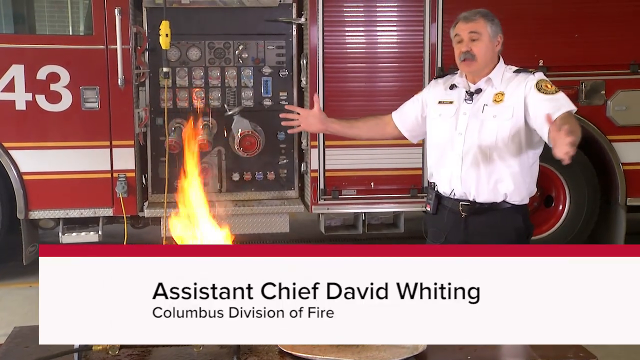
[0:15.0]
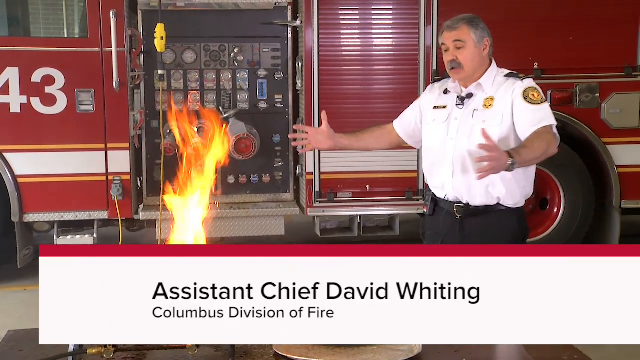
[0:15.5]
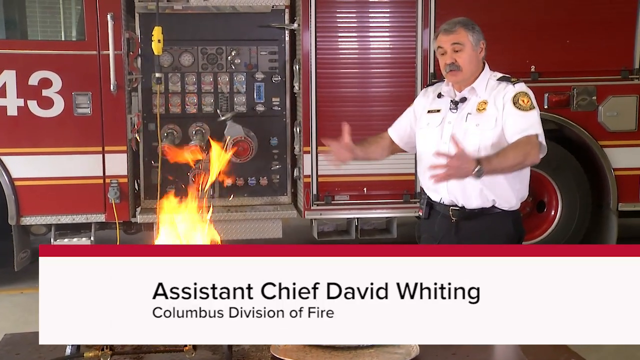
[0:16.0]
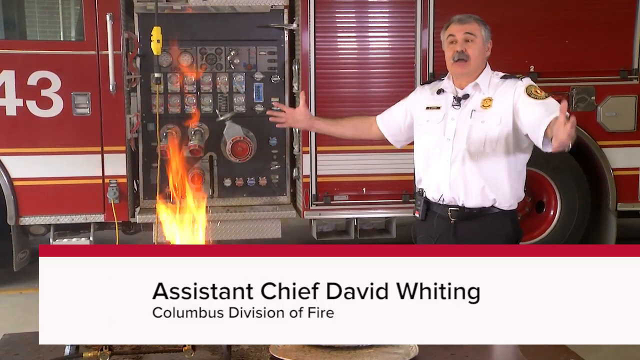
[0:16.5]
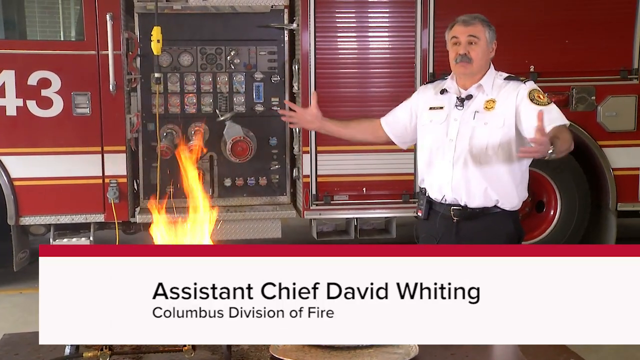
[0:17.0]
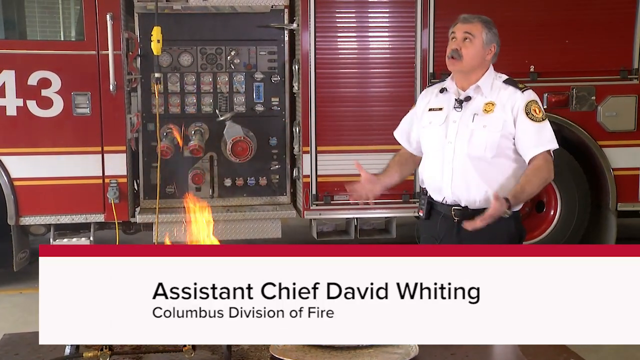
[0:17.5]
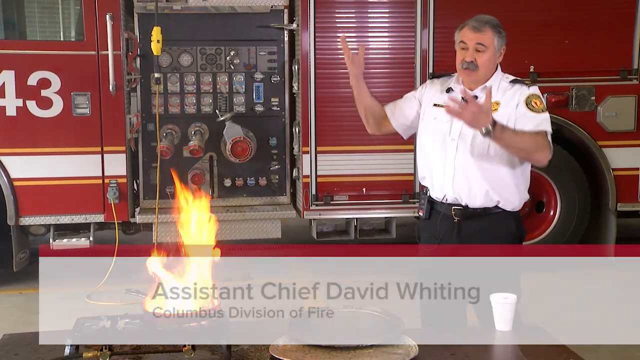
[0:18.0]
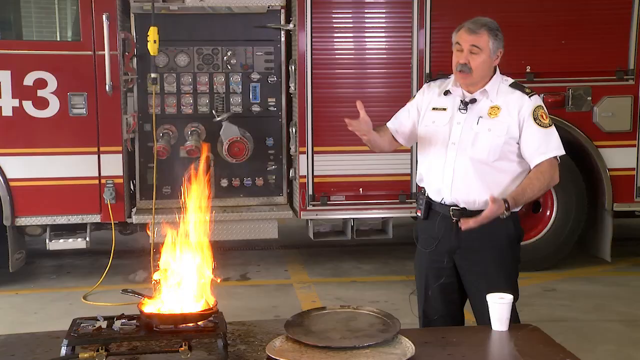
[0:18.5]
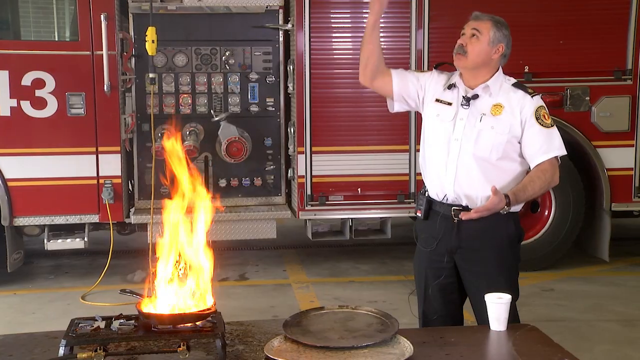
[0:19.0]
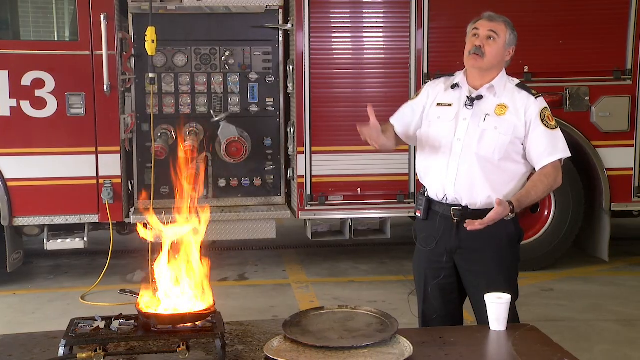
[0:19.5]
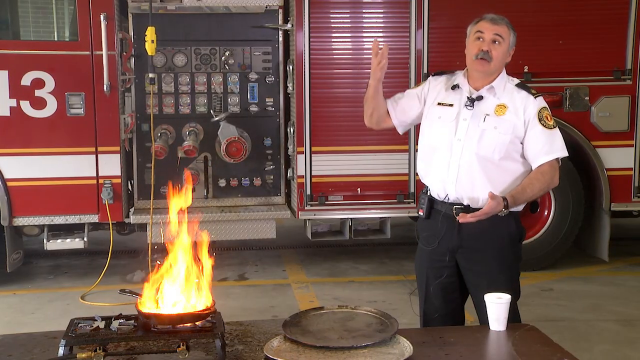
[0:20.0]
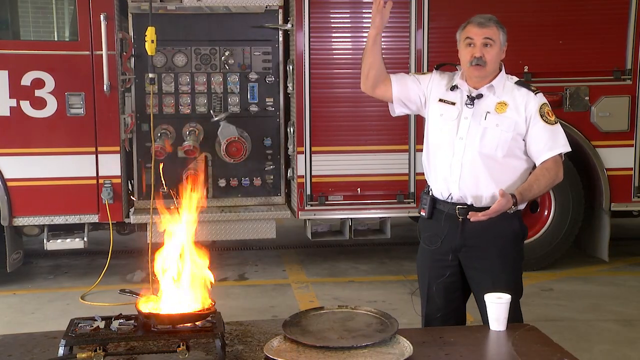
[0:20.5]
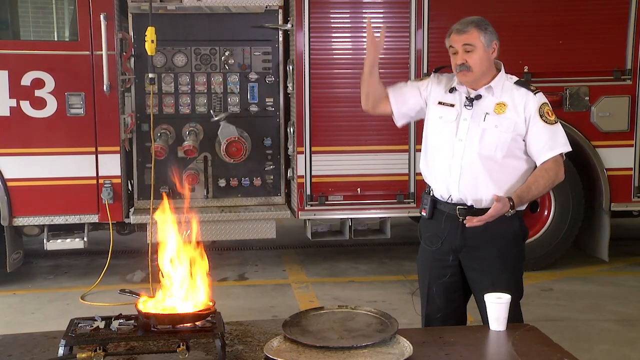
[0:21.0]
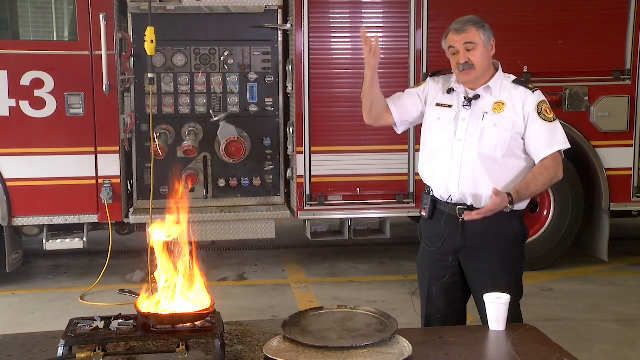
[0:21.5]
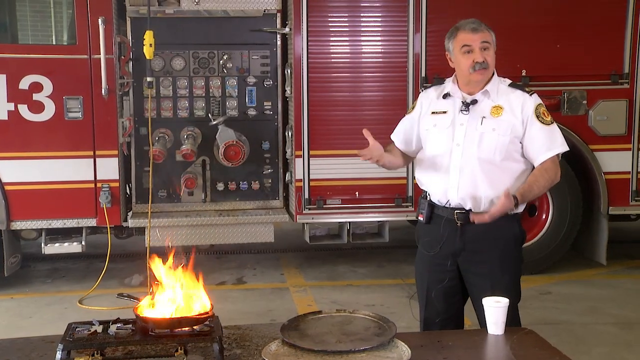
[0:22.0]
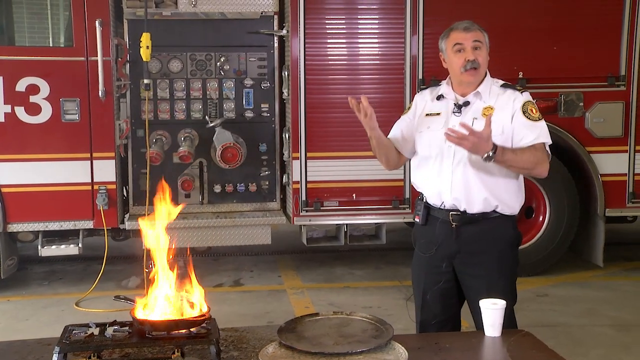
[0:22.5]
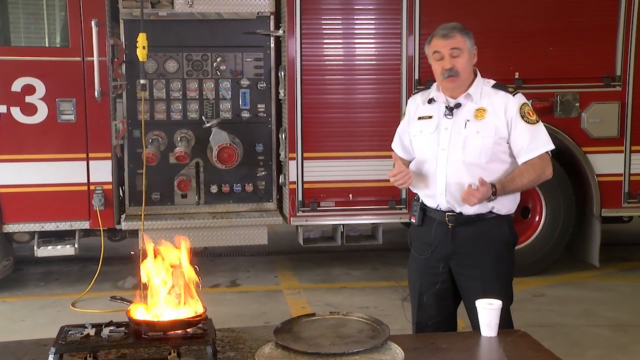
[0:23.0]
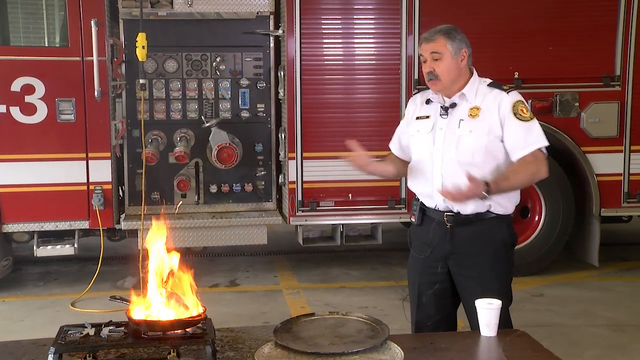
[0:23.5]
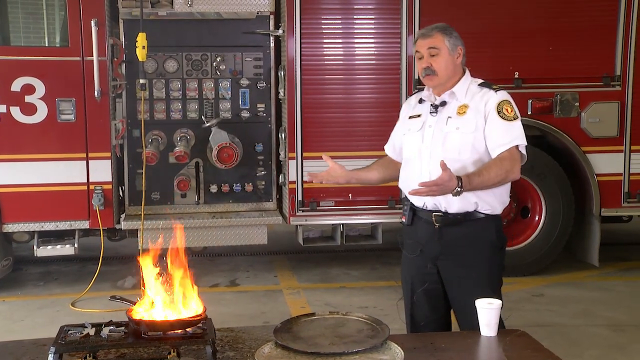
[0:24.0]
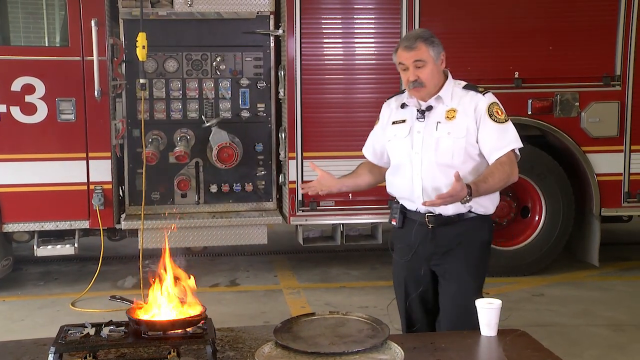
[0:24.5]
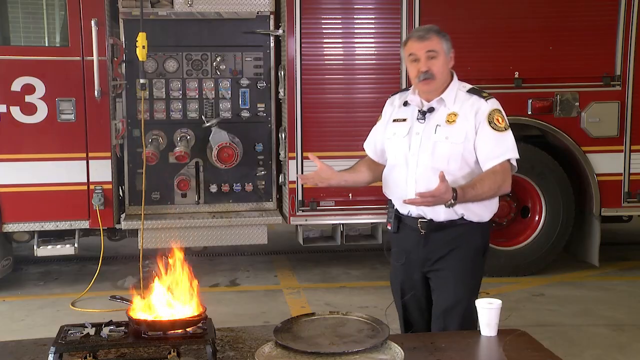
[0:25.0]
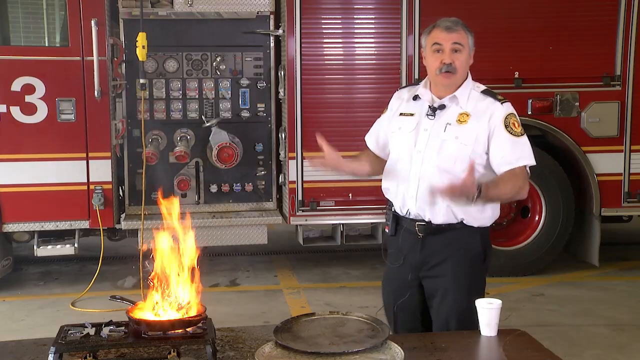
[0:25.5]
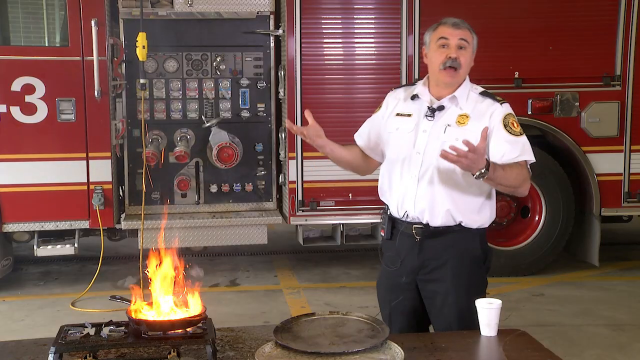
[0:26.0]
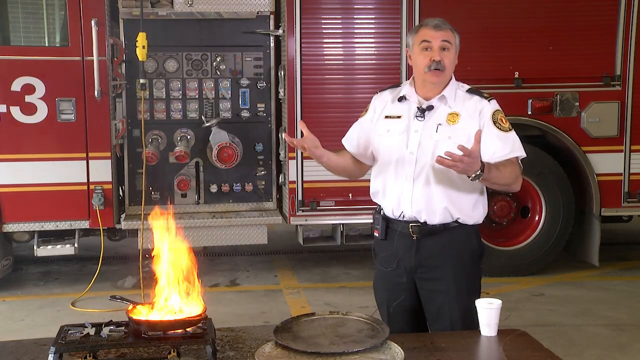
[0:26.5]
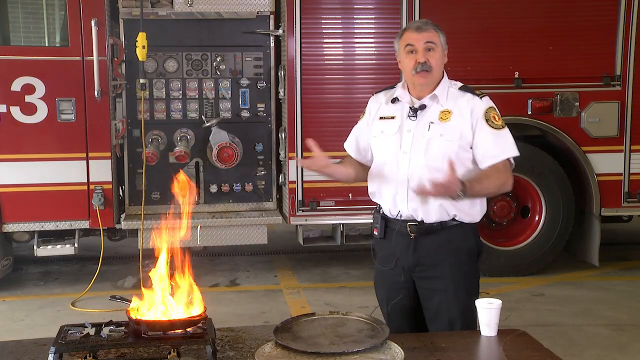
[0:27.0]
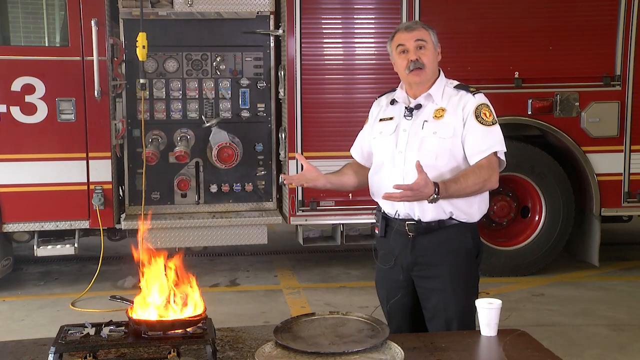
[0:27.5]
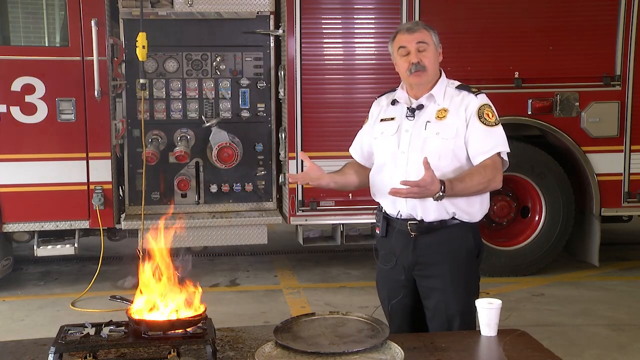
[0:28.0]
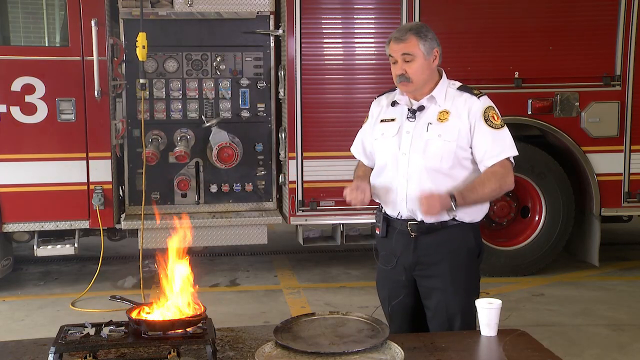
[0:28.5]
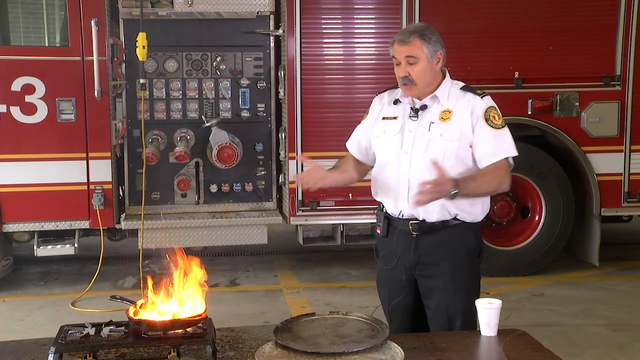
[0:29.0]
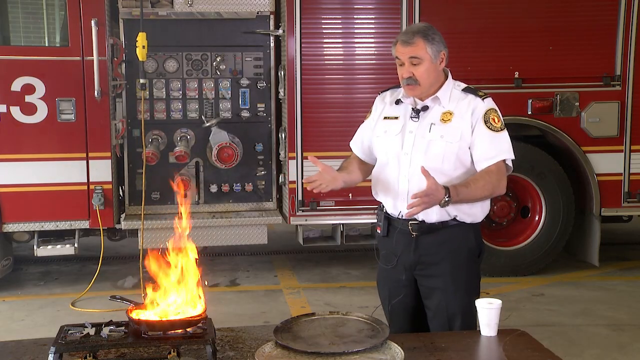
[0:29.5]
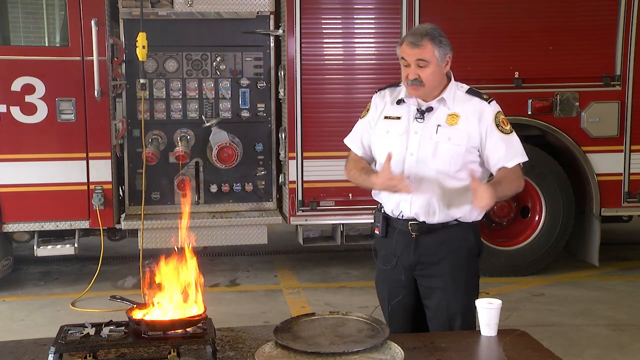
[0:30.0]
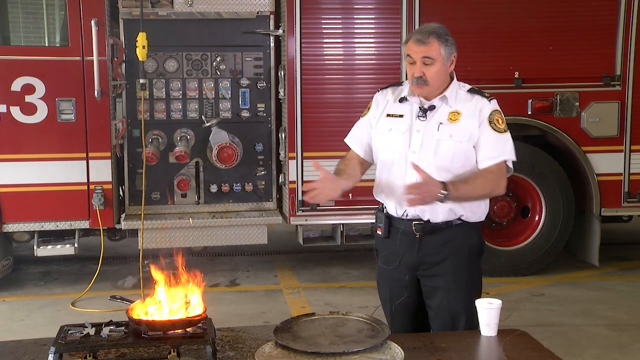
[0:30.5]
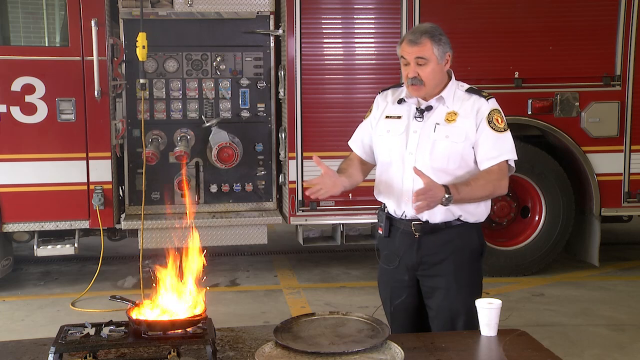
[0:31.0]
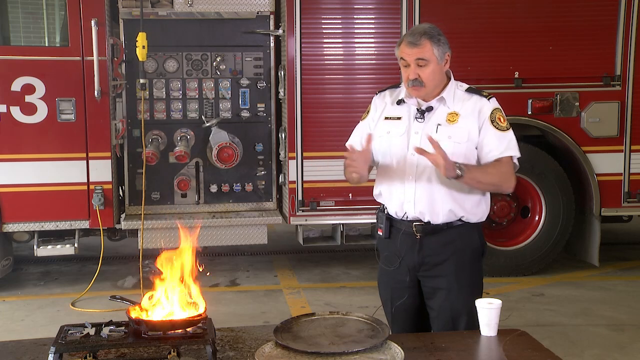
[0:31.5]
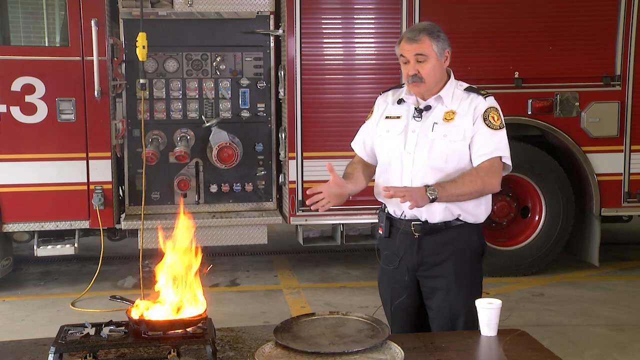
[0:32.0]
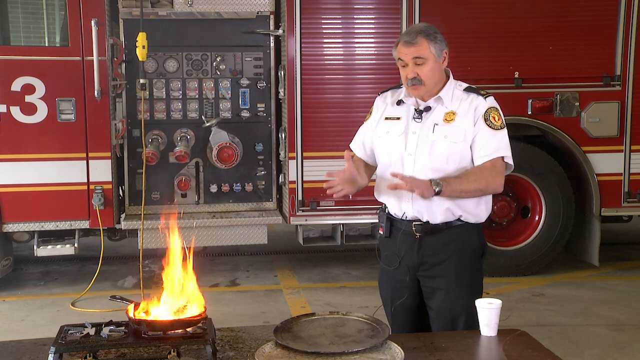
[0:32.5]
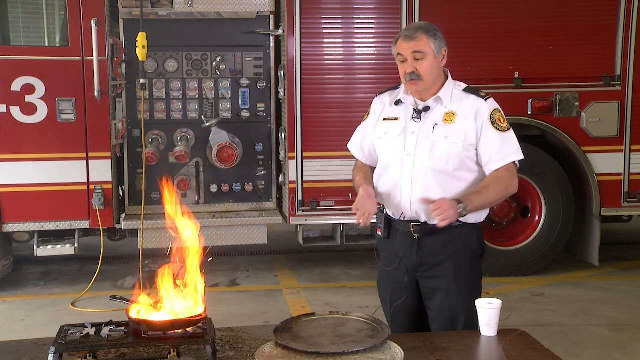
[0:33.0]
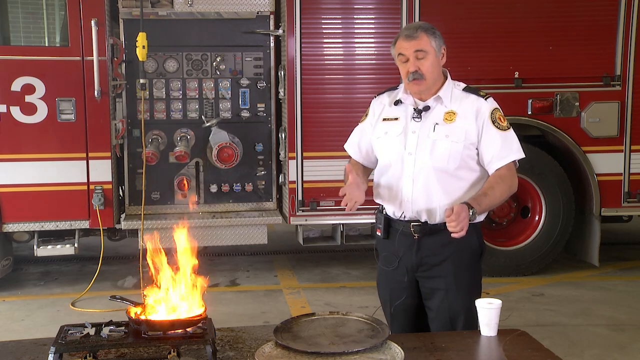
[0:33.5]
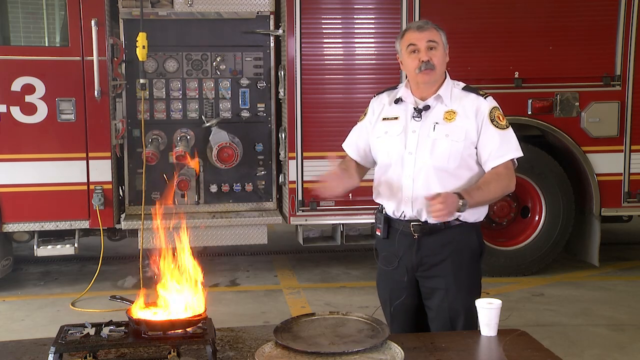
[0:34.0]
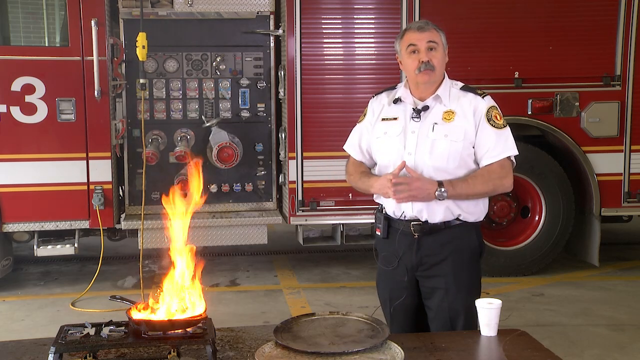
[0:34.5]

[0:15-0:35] The man is identified as Assistant Chief David Whiting from the Columbus Division of Fire. He continues gesturing, motioning his hands toward the ceiling. A little smoke is visible. The fire truck is very clearly in the background, showing its side with control panels and hose hookups, and part of the number on the cab, a 43. The burner is set on top of what looks like a fold-out wooden table, and next to it there appear to be a couple of pie tins, possibly large circular baking pans.